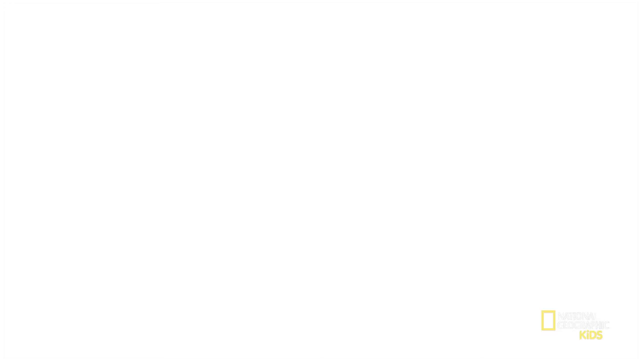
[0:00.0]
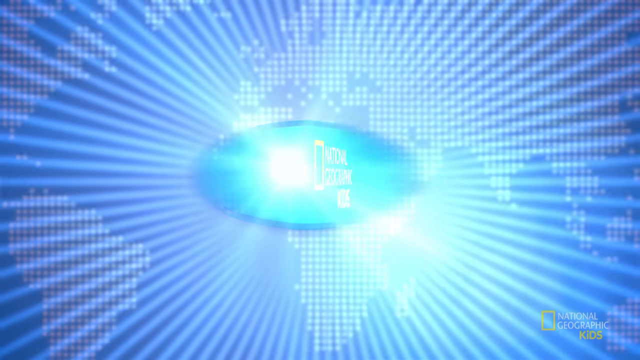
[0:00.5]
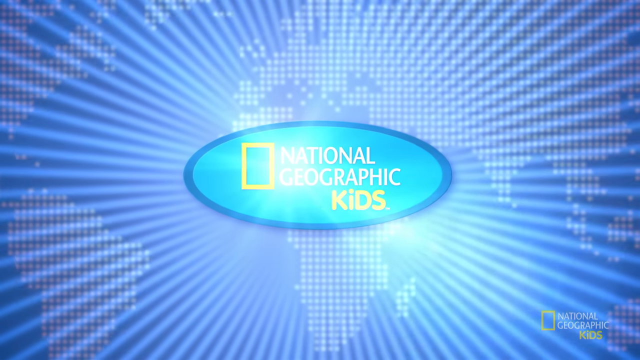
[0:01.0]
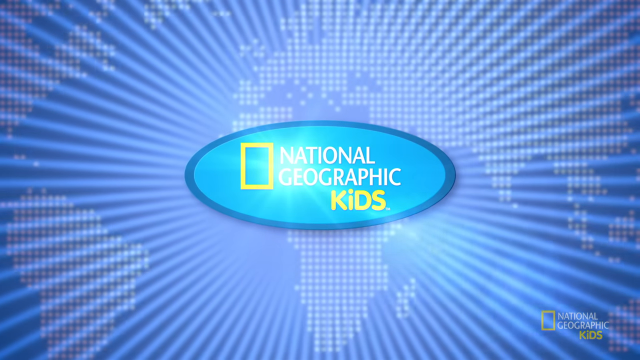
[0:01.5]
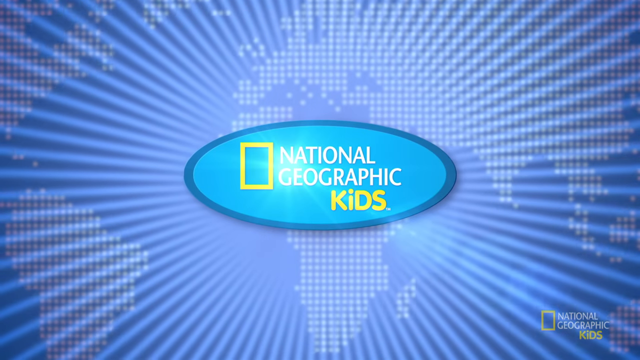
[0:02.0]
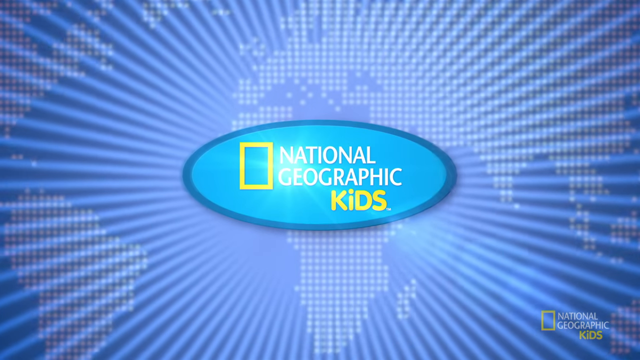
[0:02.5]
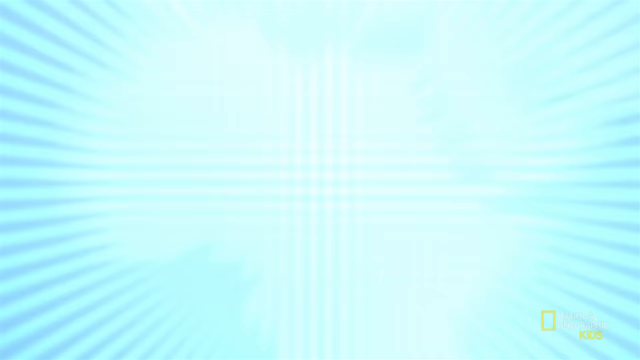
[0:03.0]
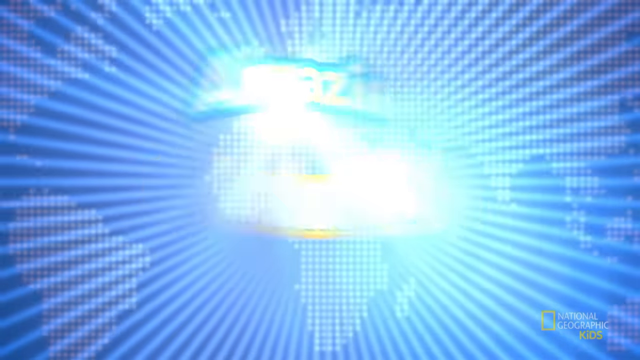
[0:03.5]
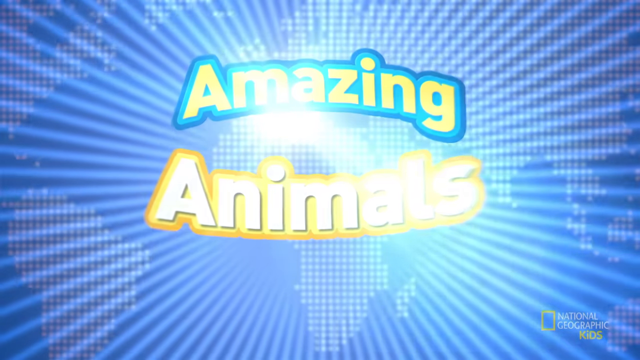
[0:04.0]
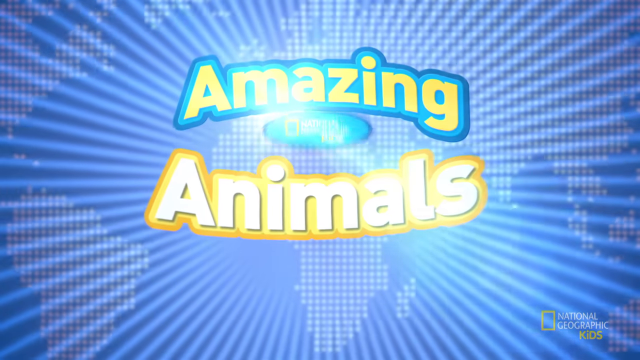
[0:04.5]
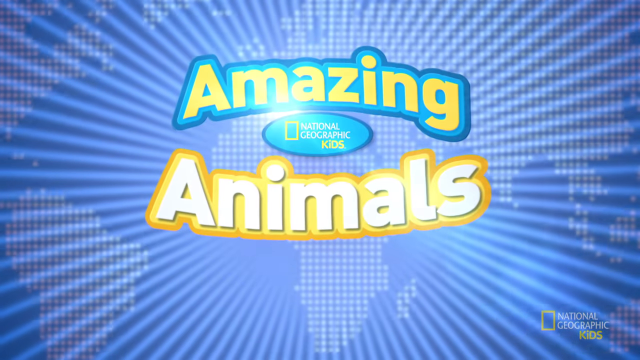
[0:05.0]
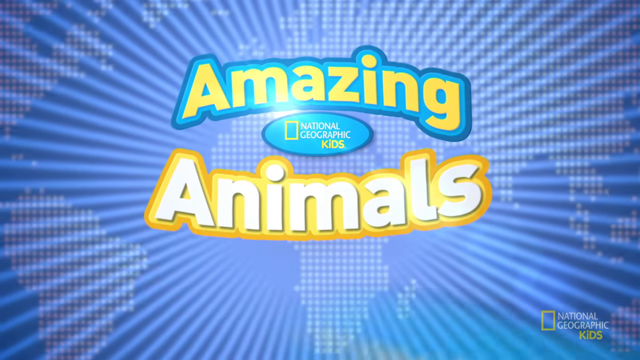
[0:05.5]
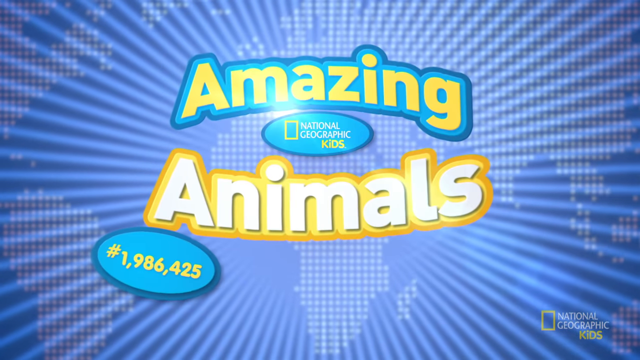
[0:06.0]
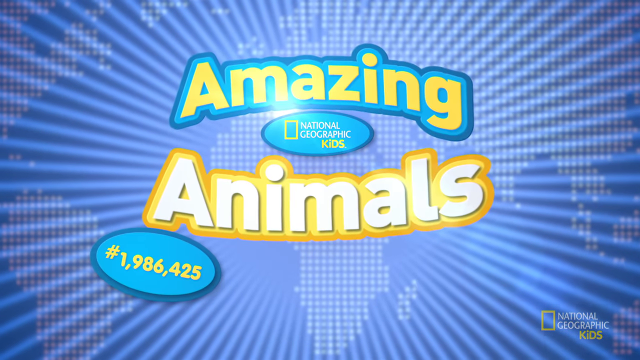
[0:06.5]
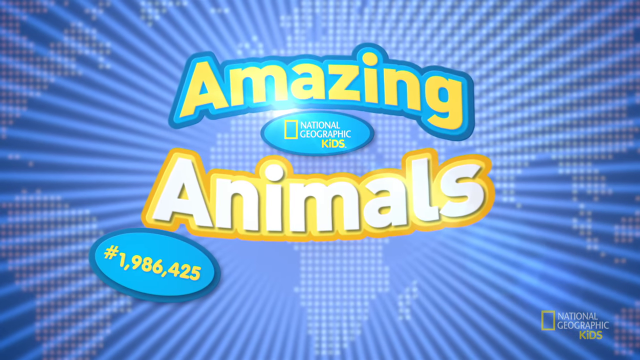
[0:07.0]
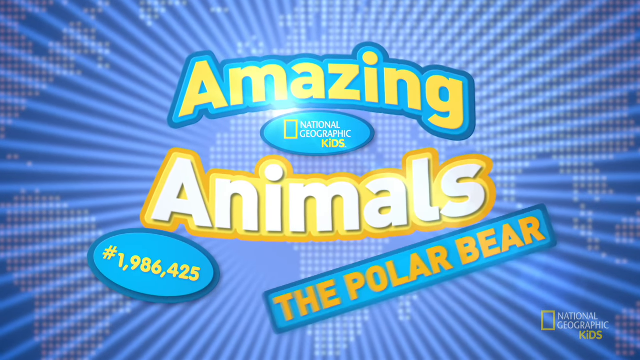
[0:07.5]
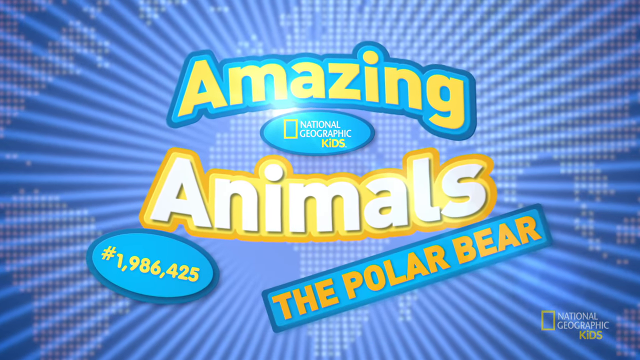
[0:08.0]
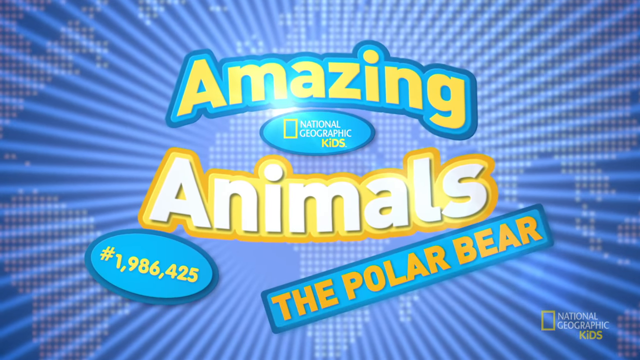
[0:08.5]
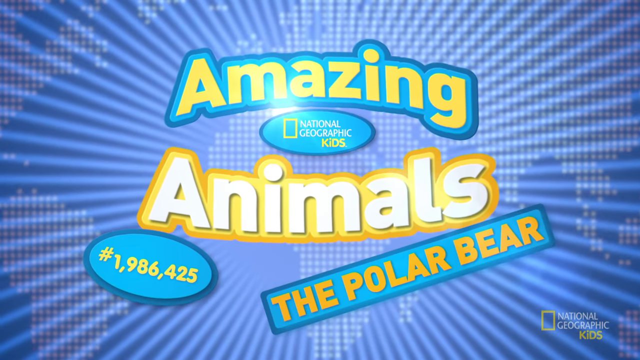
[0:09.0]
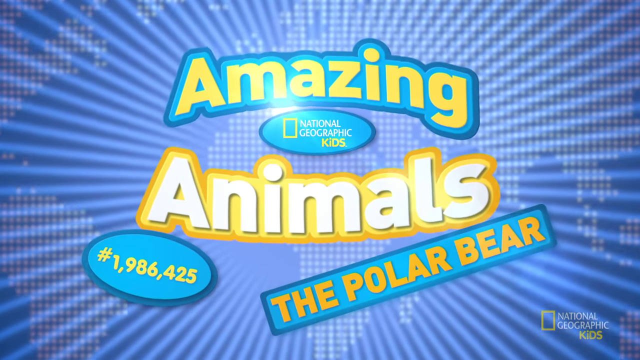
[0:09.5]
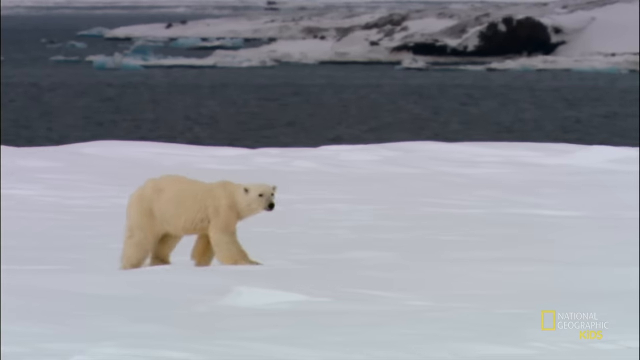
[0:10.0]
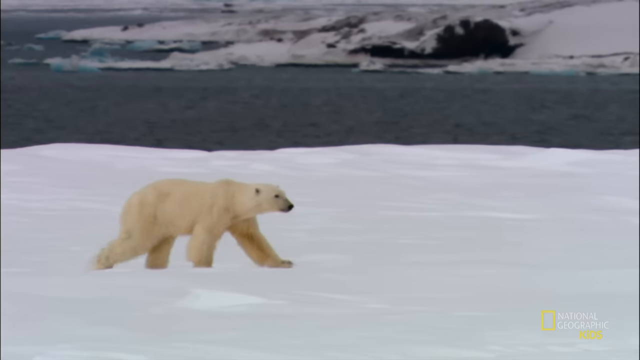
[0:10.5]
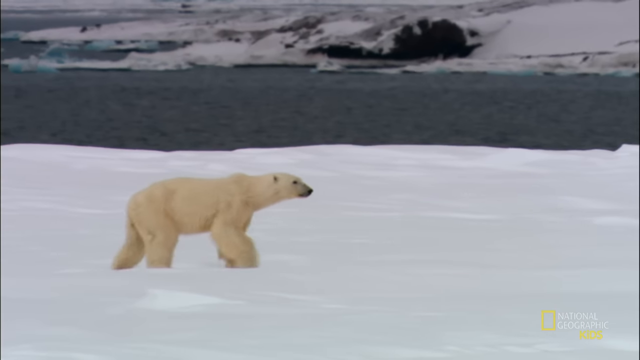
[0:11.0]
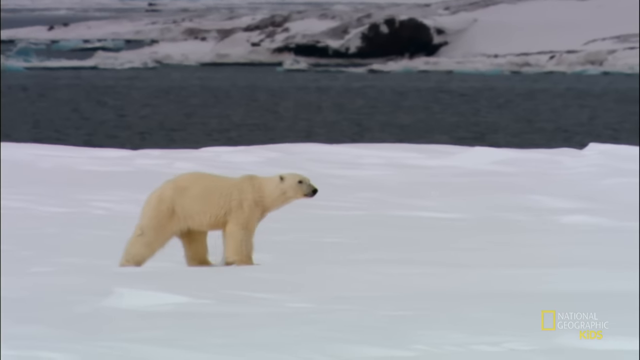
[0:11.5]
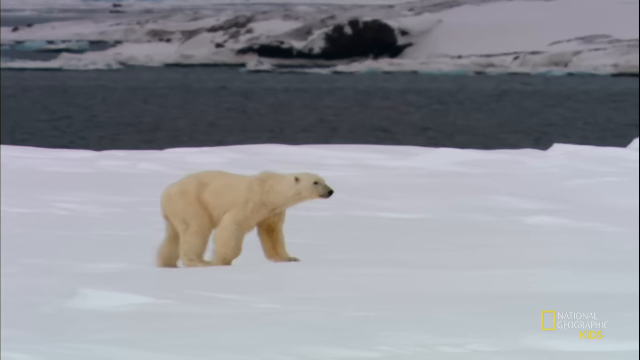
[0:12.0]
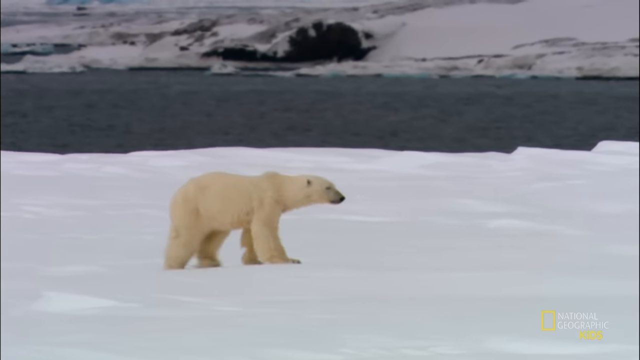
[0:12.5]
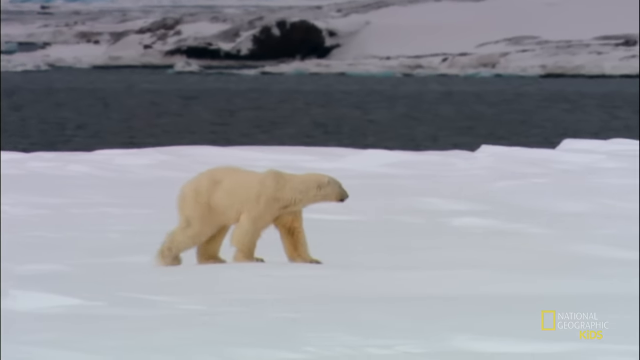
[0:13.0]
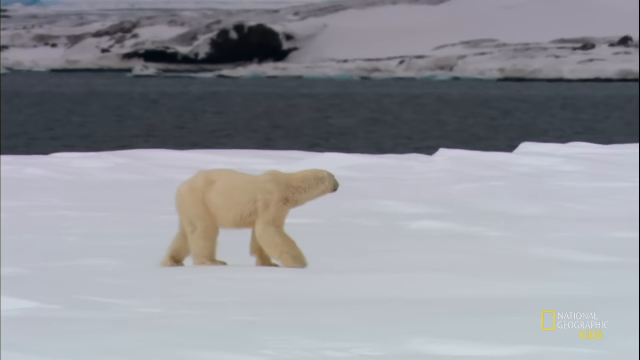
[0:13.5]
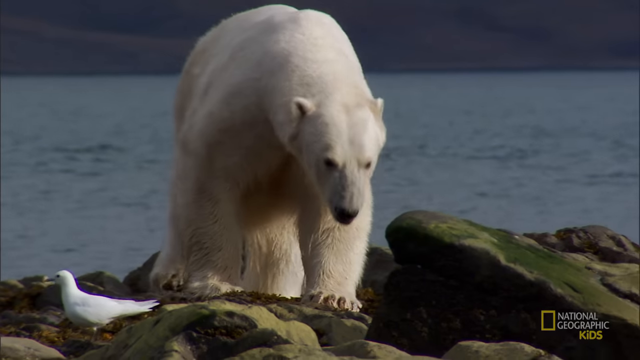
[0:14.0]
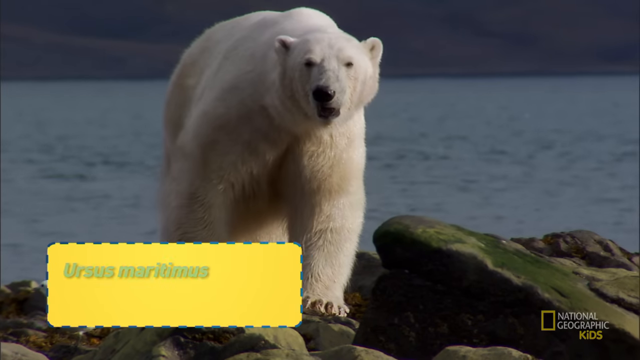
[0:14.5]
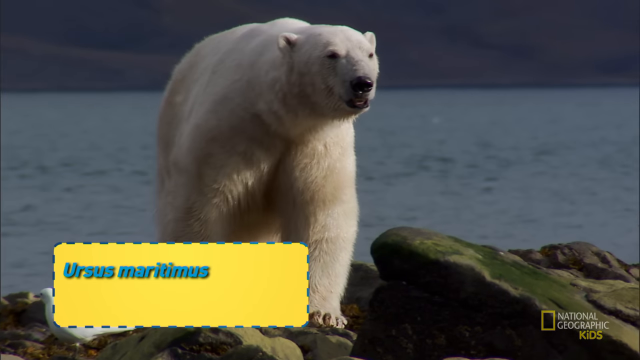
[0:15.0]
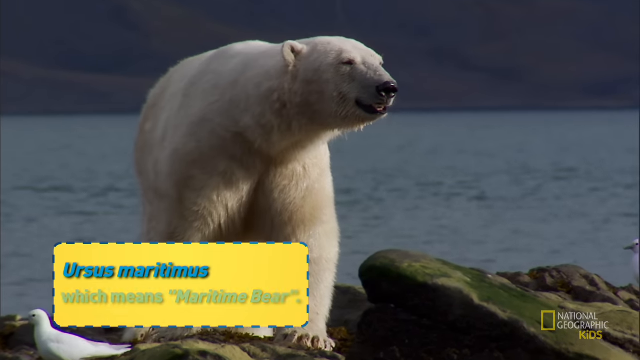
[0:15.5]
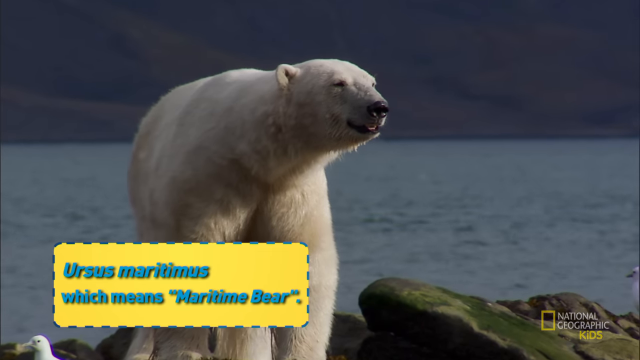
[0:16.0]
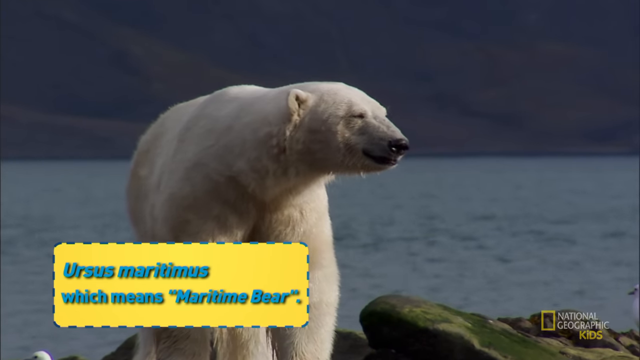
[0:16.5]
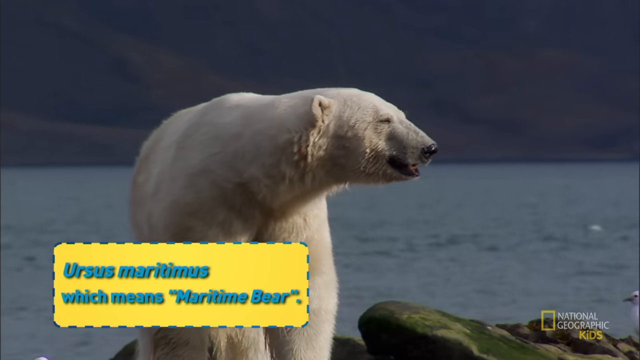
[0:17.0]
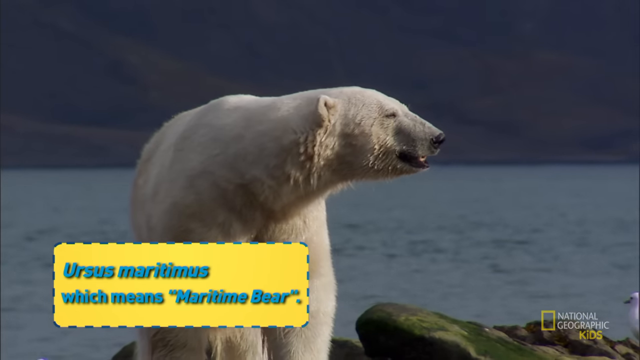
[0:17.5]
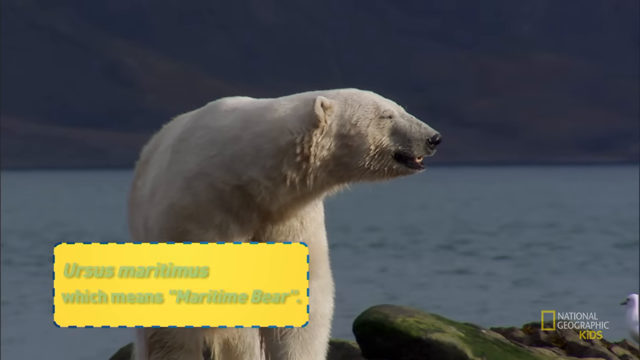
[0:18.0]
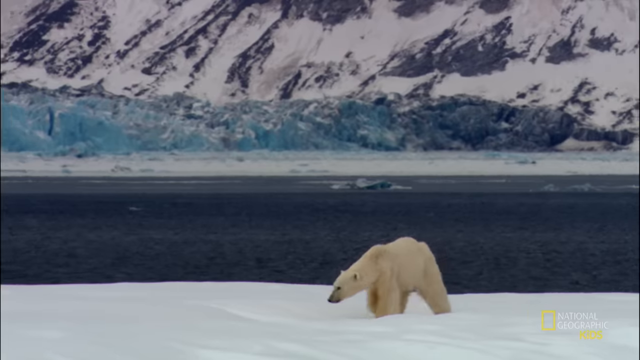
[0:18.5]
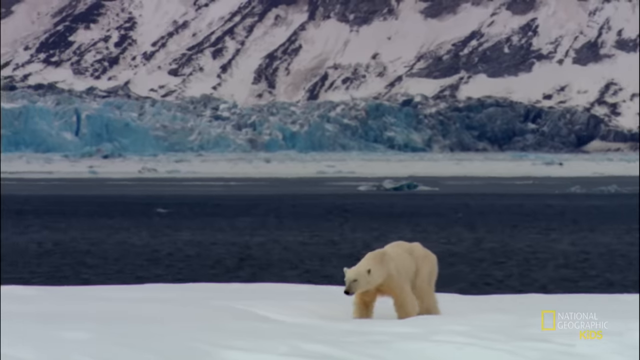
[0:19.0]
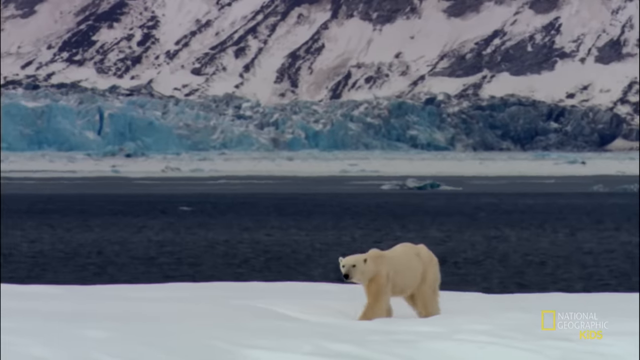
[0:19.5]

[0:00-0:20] The words "National Geographic Kids" appear on the screen on an oval blue figure in the middle that spins, then spins out of the screen. The sides of the screen are blue, kind of like rays coming out to the sides. Text reads "#1986425 the polar bear," and "amazing animals" appears on either side of the National Geographic Kids sign while the outside spins. A real-life polar bear walks in the snow, then is on top of rocks with no snow, looking around, and then walks on snow again. Water moves behind him, and melting snow is visible. A yellow box appears with the name "Ursus Maritimus," meaning maritime bear, and a National Geographic Kids sign is in the lower right corner.